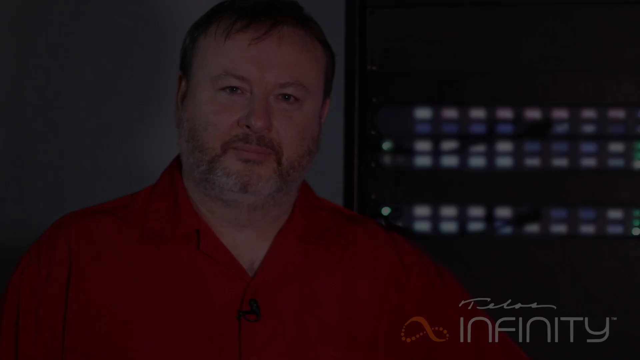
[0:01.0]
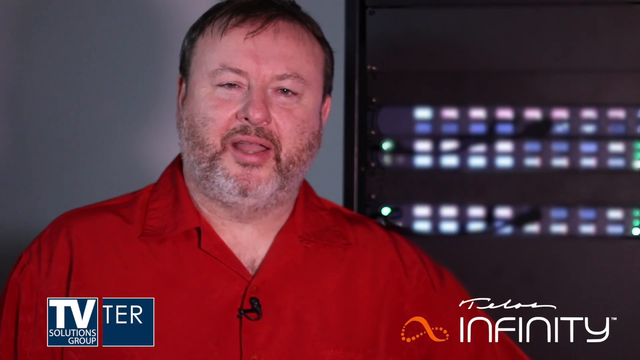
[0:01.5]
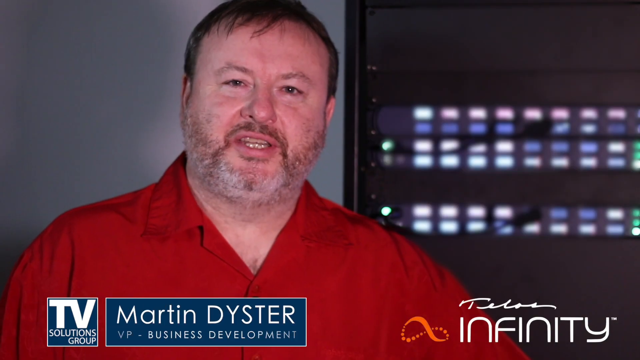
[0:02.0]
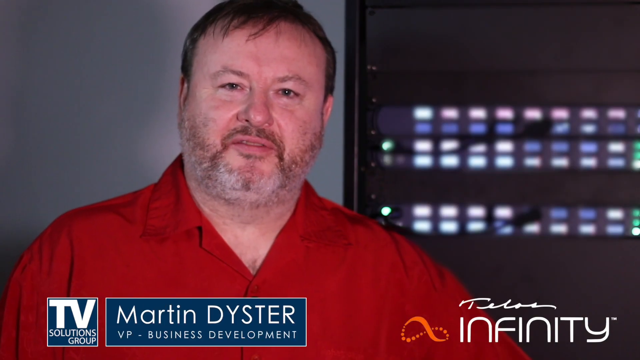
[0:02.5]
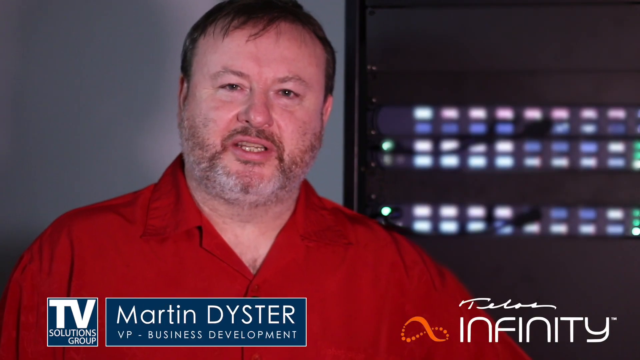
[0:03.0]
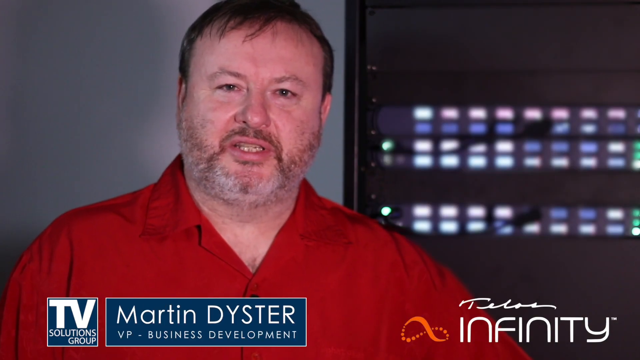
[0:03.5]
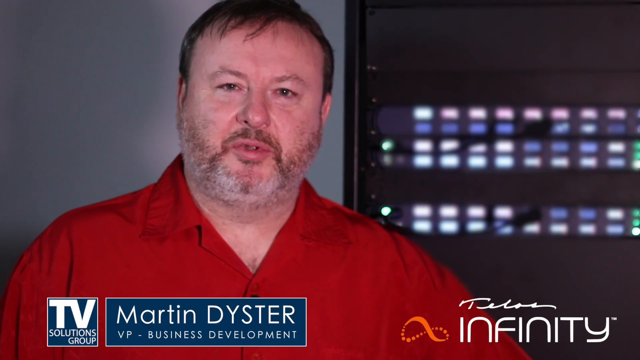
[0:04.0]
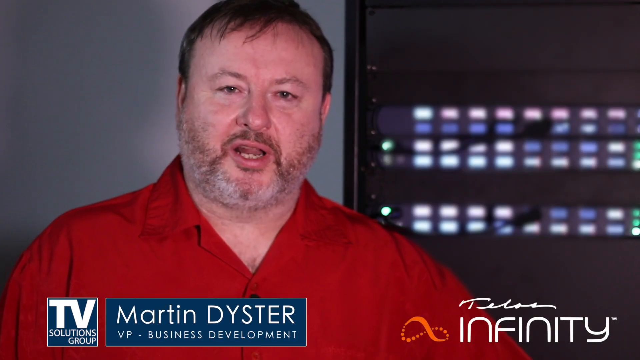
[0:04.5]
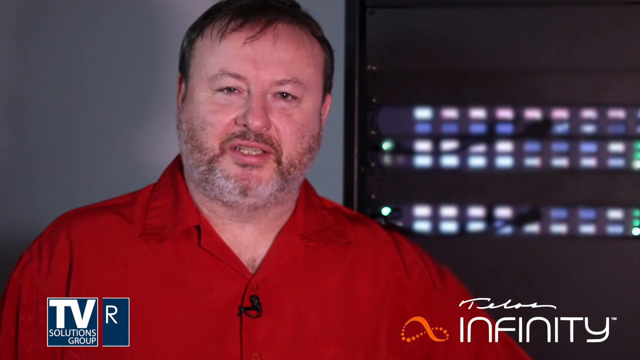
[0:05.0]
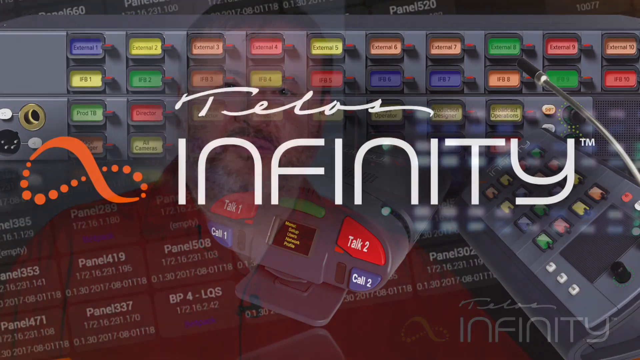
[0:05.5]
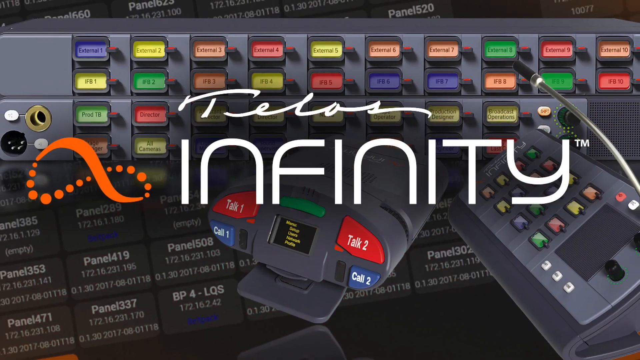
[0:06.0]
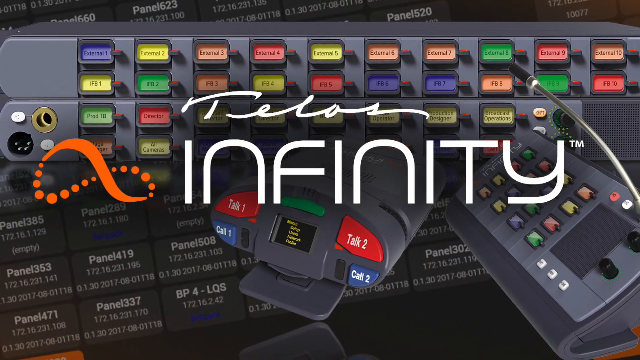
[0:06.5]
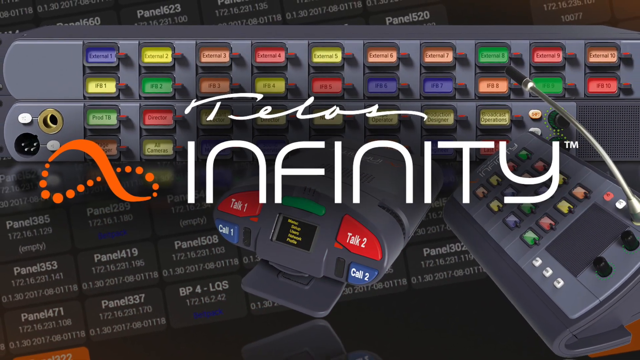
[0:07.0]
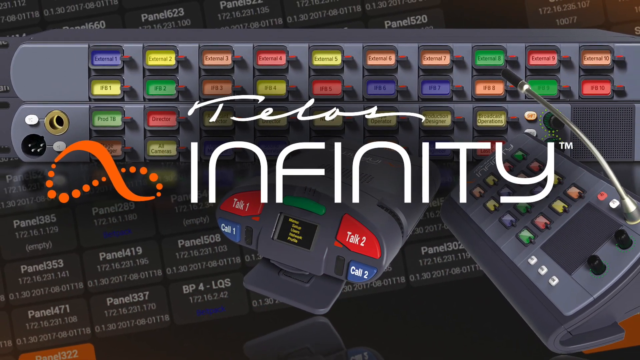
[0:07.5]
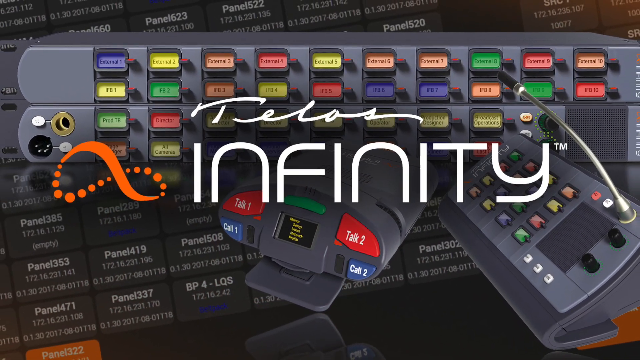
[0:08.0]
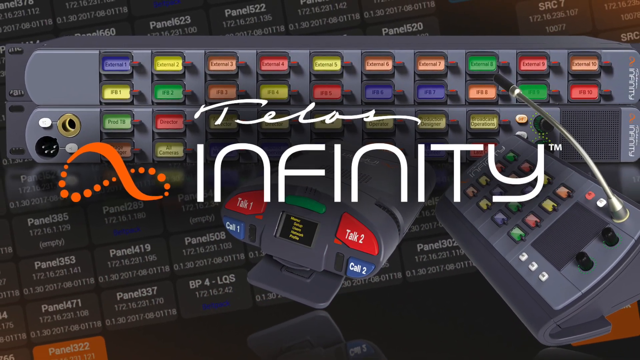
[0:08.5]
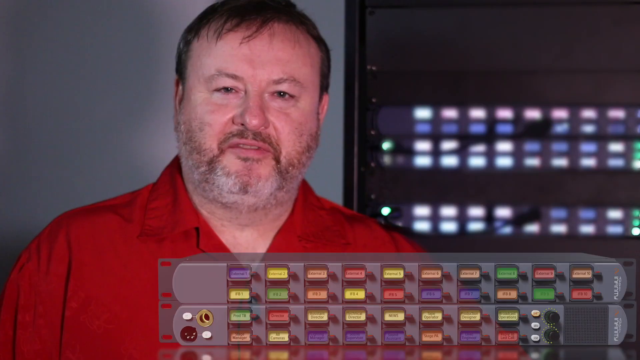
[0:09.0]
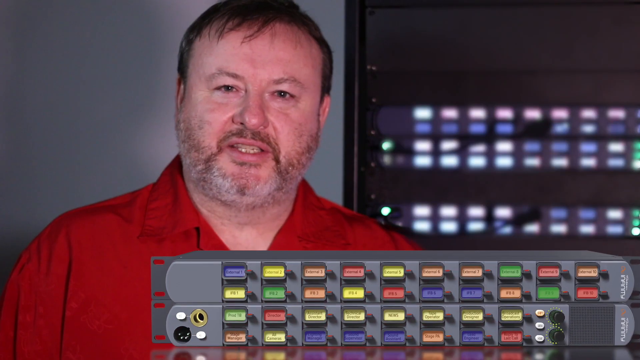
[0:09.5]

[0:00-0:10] A Caucasian man speaks to the camera from the left side of the screen. He wears a red button-down shirt and has short brown hair, a brown mustache and a gray beard. On the right side of the screen, to his left, is an image with rows of lit buttons. The screen changes to text in the center that says "Telos and Infinity", with rows of buttons behind it, each button carrying a different text tab. At the bottom of the screen is an instrument with two buttons on the left and two on the right; the left ones say "Talk 1" and "Call 1", the right ones say "Talk 2" and "Call 2", and a small screen is in the center between them.